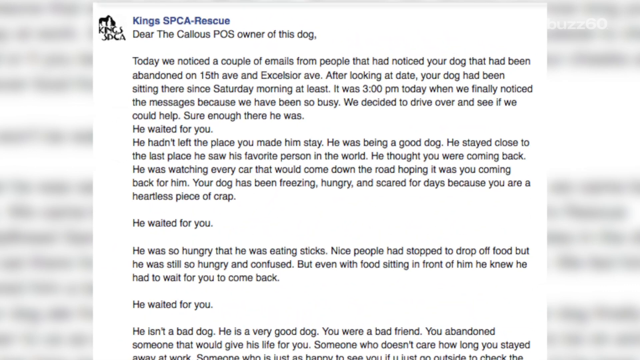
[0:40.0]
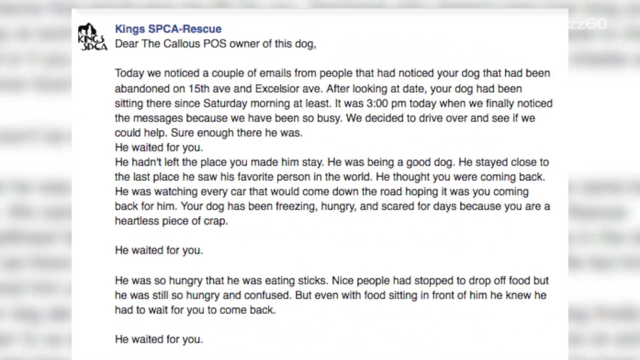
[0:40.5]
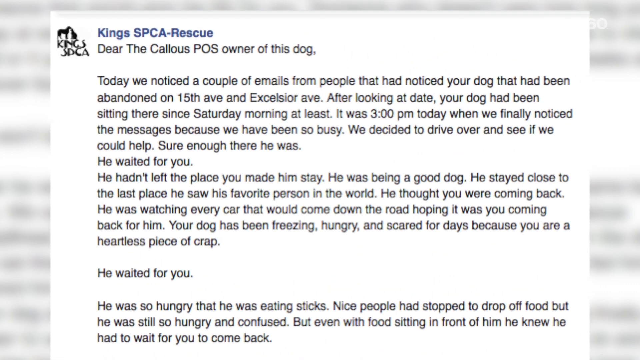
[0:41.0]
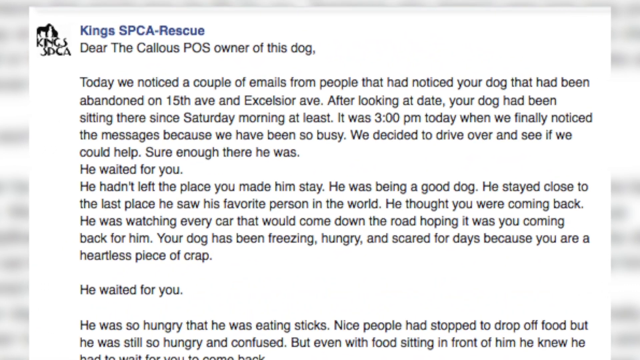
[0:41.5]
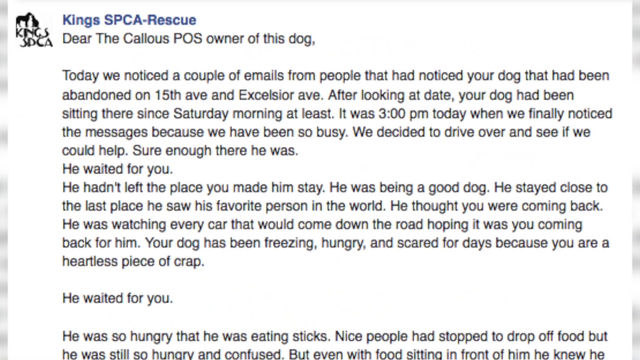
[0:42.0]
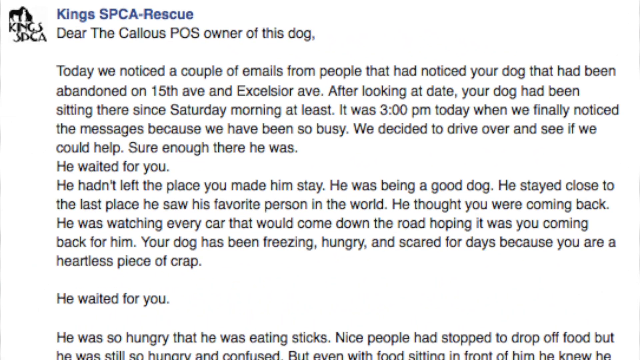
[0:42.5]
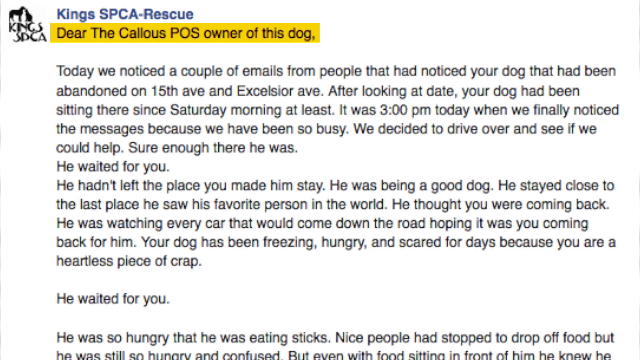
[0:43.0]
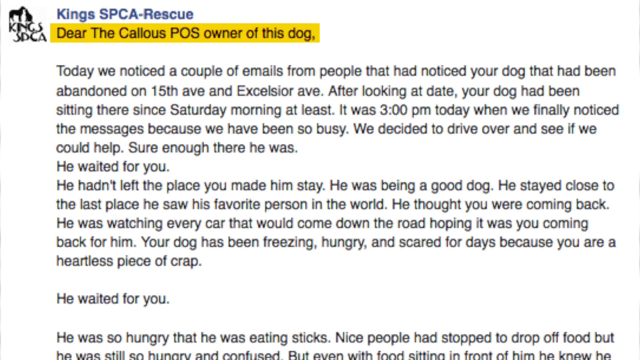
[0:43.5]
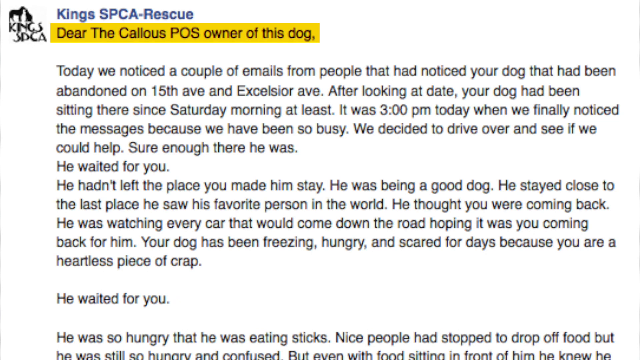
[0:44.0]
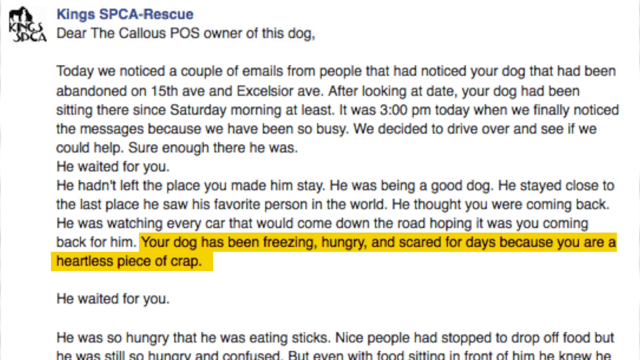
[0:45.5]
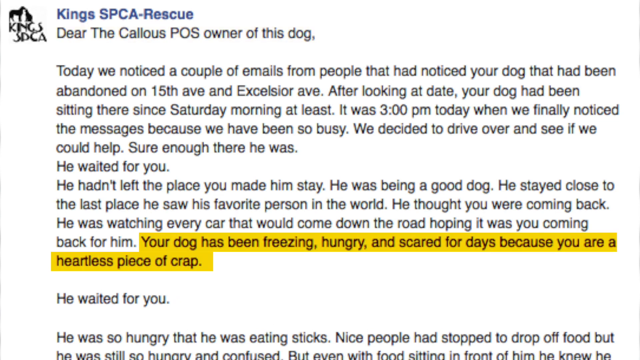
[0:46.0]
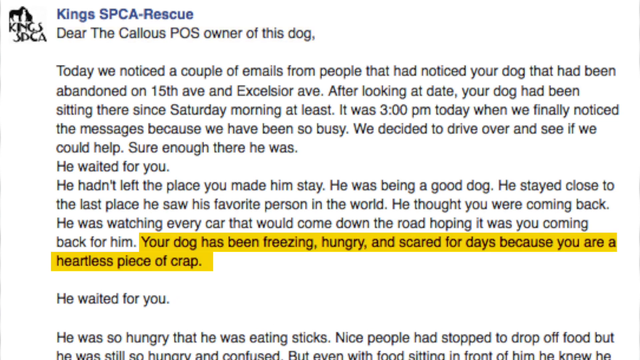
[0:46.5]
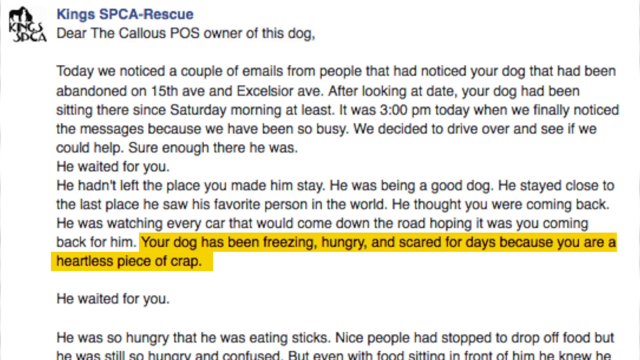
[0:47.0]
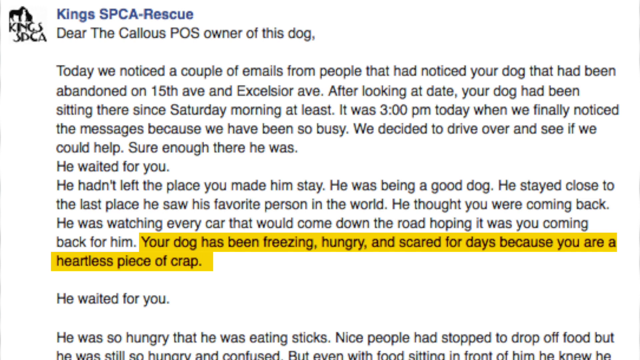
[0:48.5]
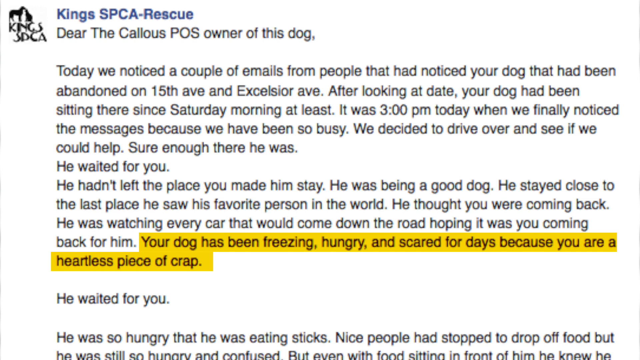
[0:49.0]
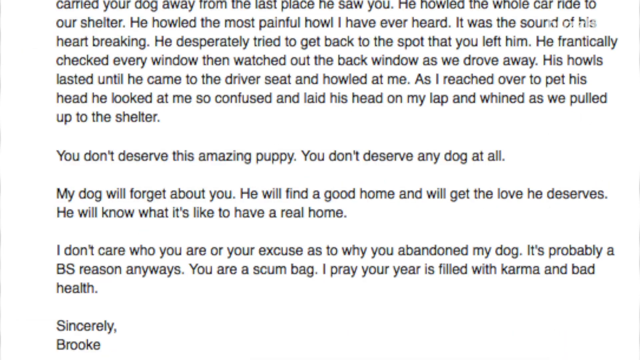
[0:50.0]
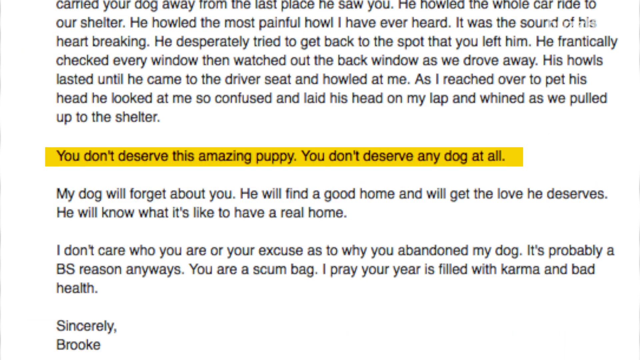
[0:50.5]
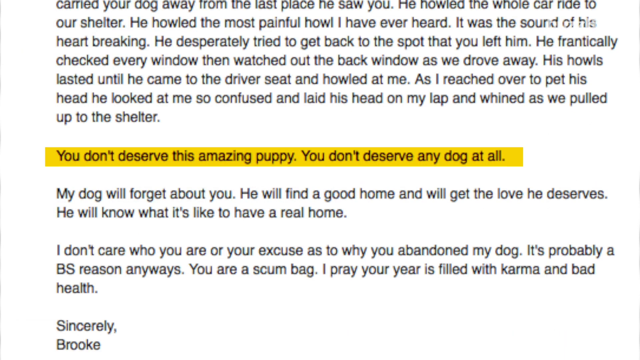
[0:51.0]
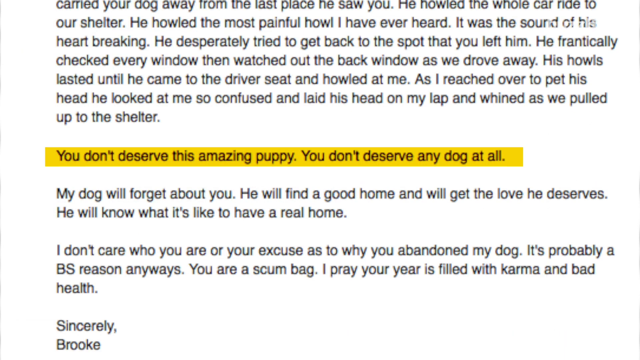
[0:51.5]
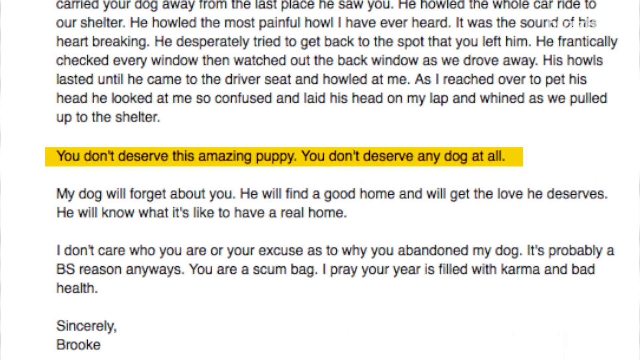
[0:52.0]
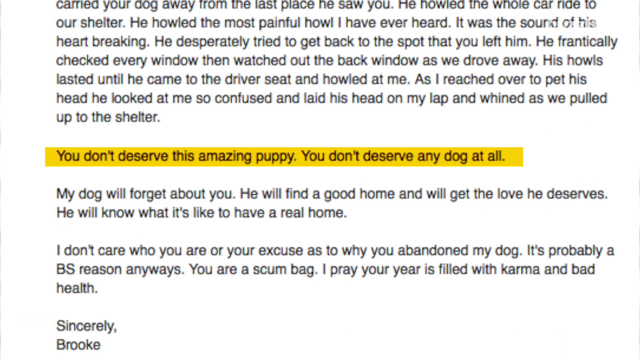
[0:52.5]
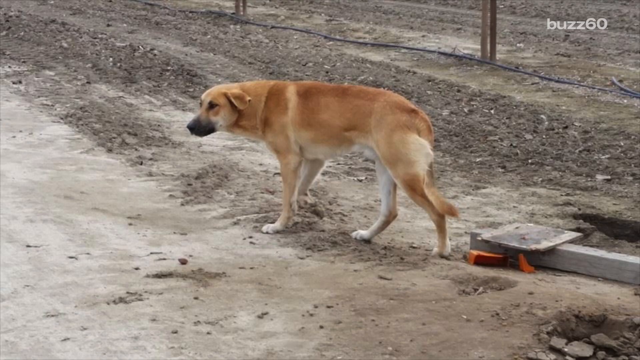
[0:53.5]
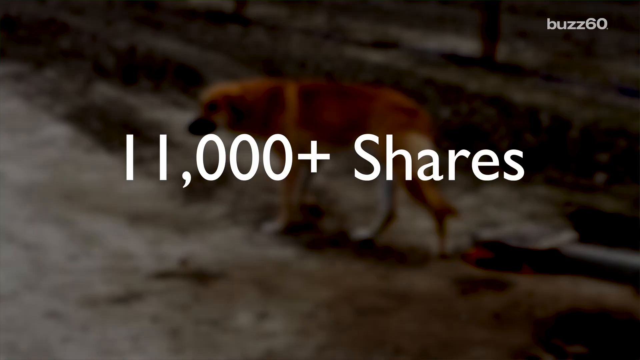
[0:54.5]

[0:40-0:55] The social media post is on screen again. It says "your dog has been freezing hungry and scared for days, you don't deserve this amazing puppy, you don't deserve a dog at all" and "my dog will forget about you, he'll never remember you." The post is about a dog that was abandoned by its owner and left freezing and hungry for days before people came to rescue it.